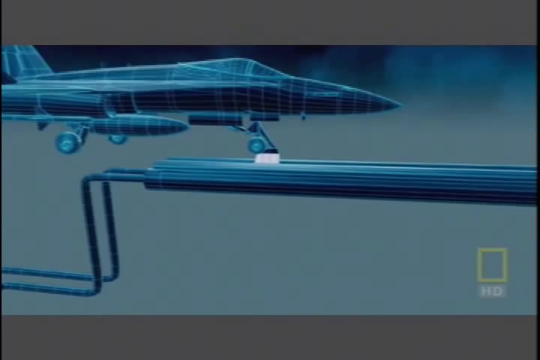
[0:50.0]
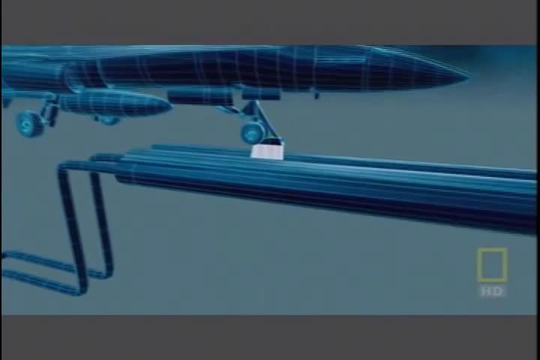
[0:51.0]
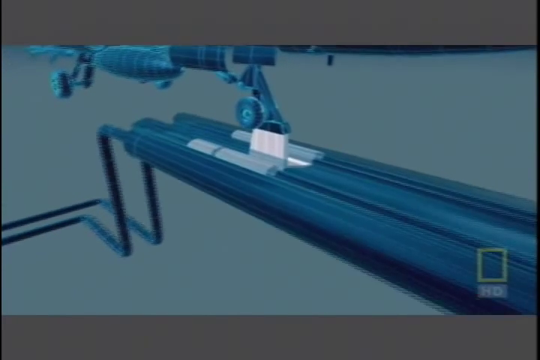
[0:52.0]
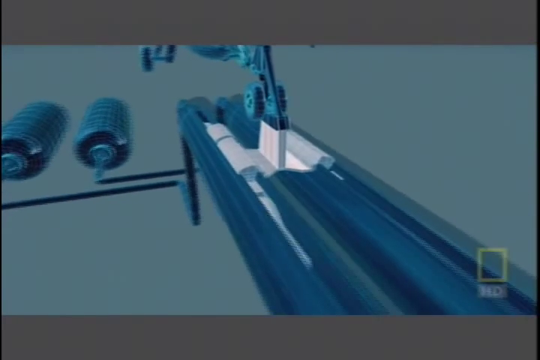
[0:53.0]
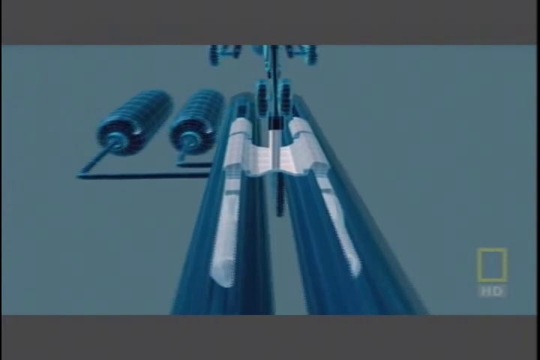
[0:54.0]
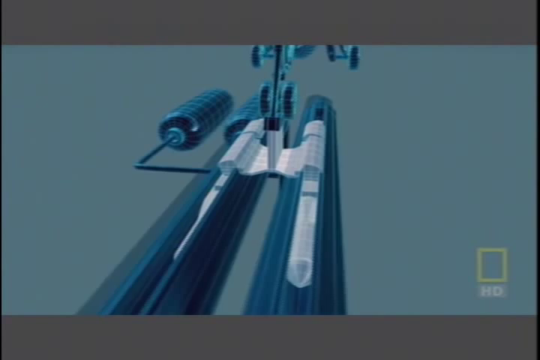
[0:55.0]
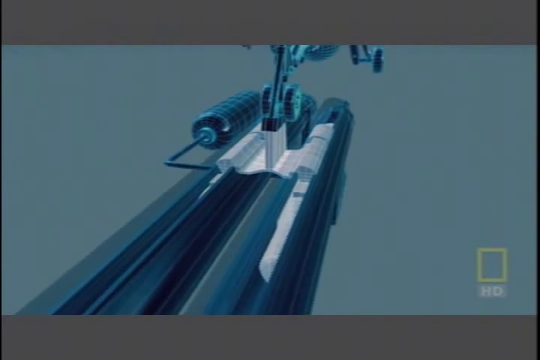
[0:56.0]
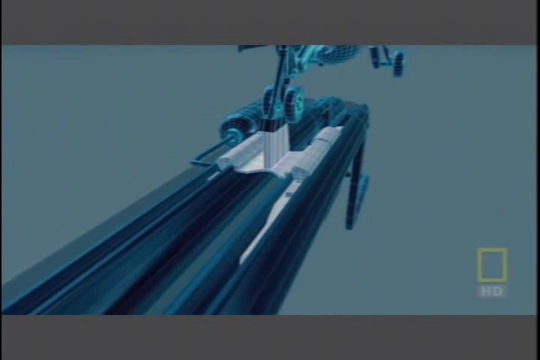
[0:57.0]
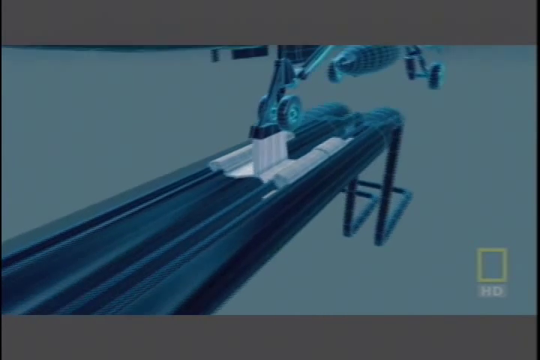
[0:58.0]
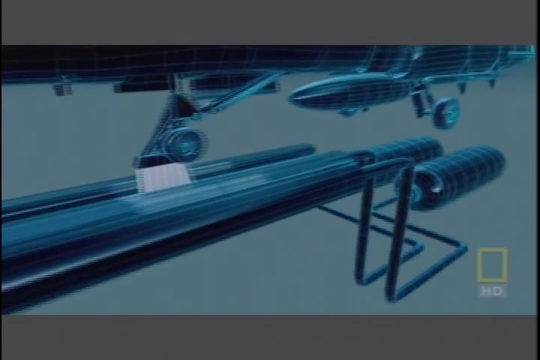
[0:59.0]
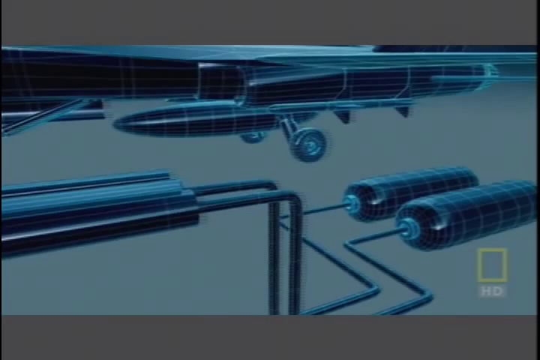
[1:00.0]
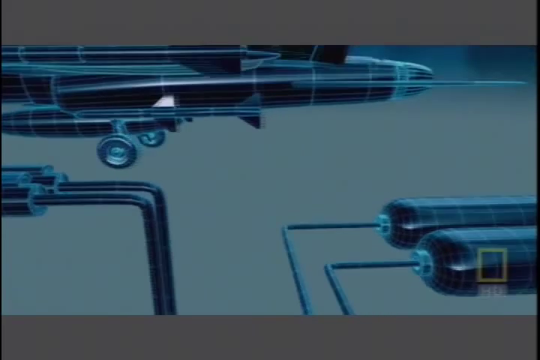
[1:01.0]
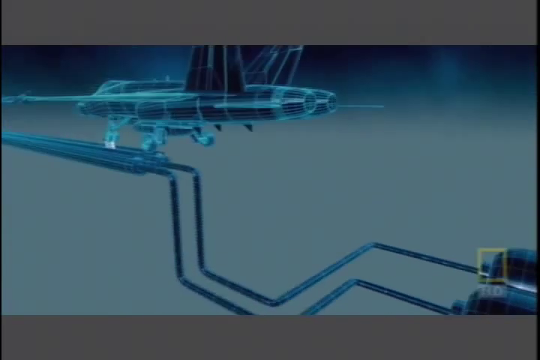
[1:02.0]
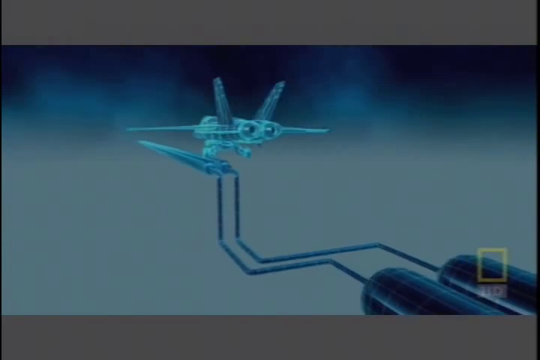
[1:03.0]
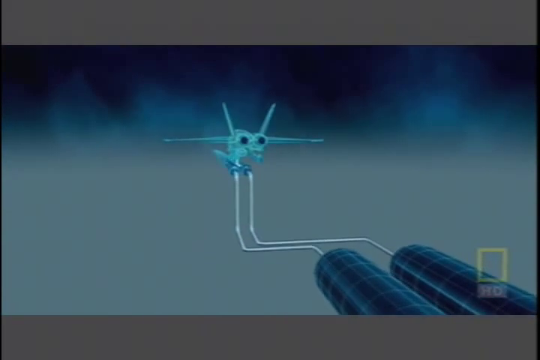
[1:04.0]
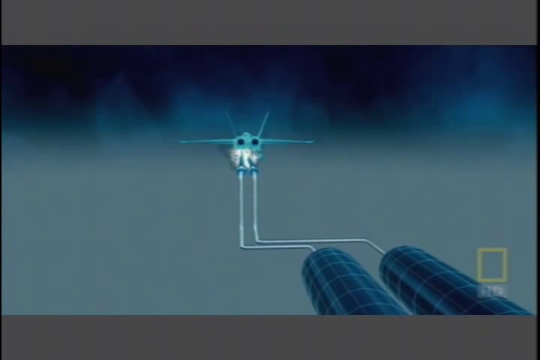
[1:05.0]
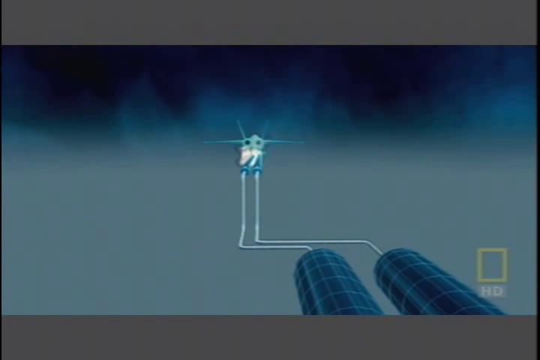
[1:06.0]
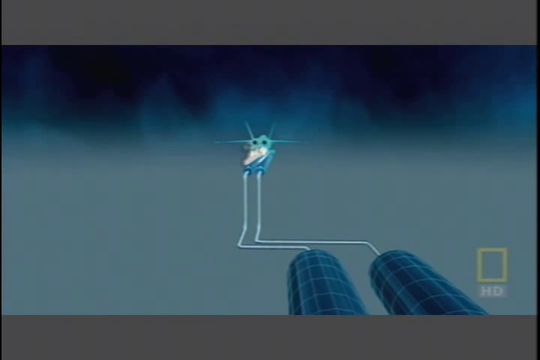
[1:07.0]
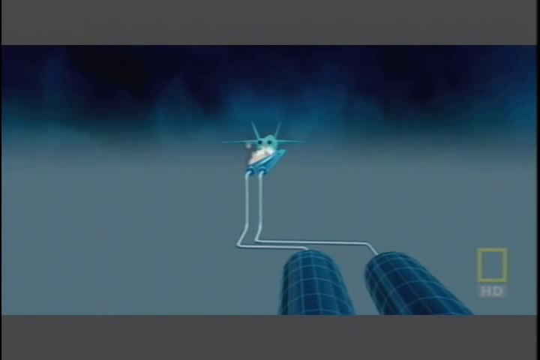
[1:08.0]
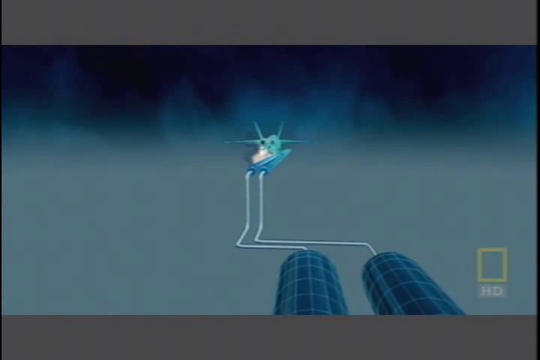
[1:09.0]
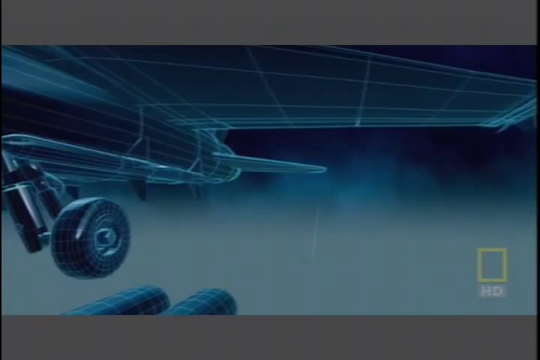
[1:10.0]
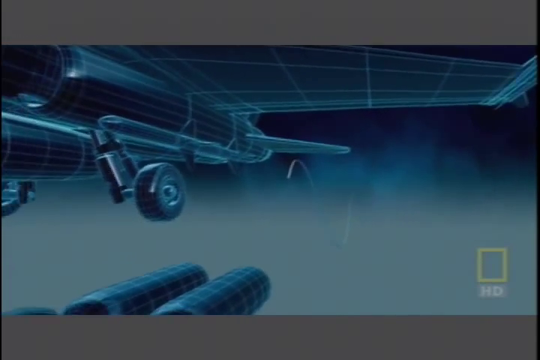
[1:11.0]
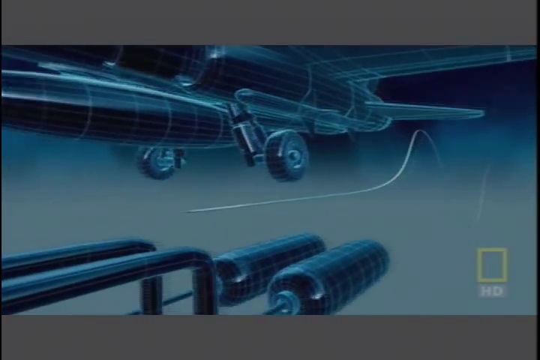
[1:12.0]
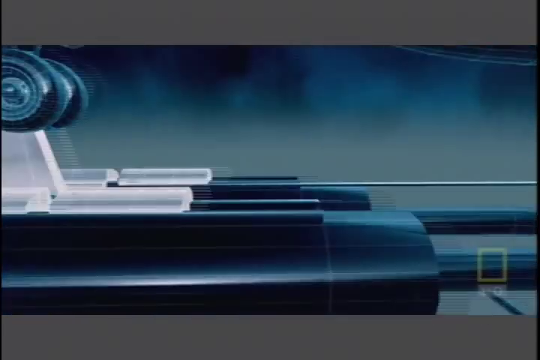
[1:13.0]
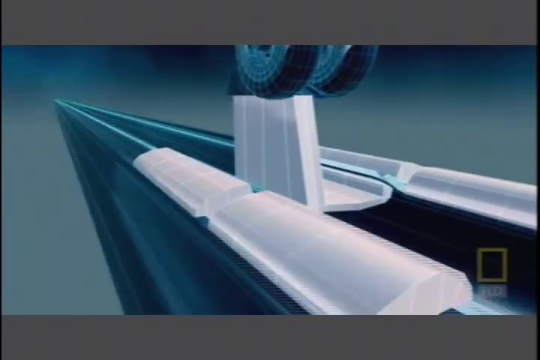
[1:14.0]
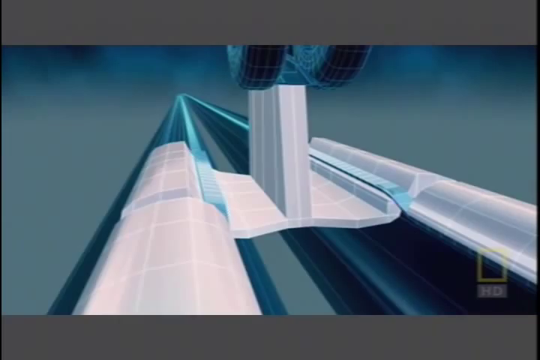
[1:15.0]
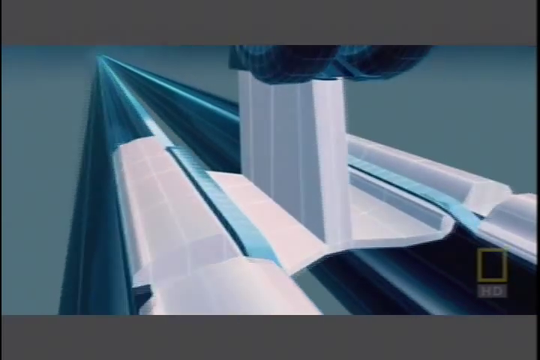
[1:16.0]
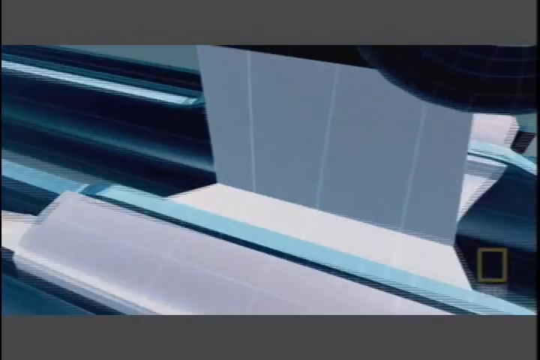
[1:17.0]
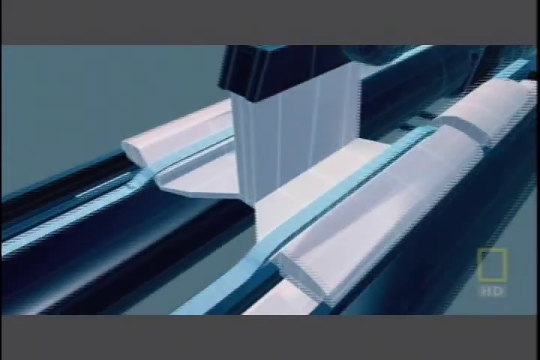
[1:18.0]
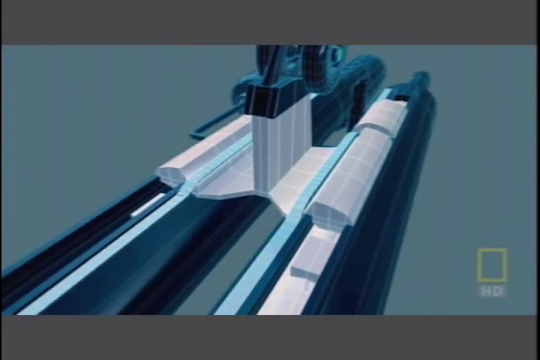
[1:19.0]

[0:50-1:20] A graphical illustration shows a fighter jet perched on the take-off structures of an aircraft carrier's runway, its front wheel resting in the groove of a rigid metal structure that looks like a long pipe. The camera pans 360 degrees, giving a panoramic view of the structure on the runway and the wheel tucked into its groove, as well as the entire jet and hydraulic pumps attached to the metal structure of the runway. The jet begins to fire flames from its exhaust. The illustration of the jet is then shown again, along with a close-up of the wheelbase attached to the runway structure. The entire illustration is in deep blue, shades of blue and grey.